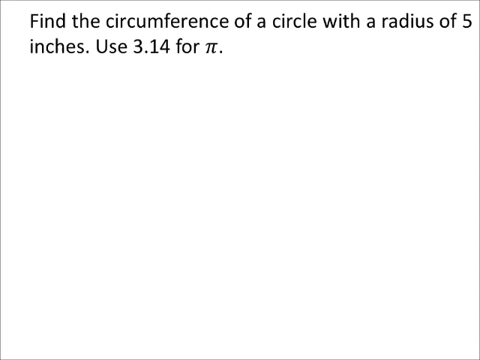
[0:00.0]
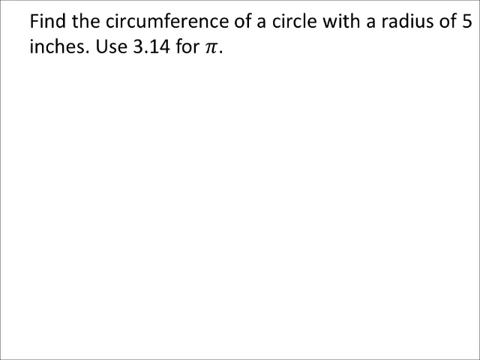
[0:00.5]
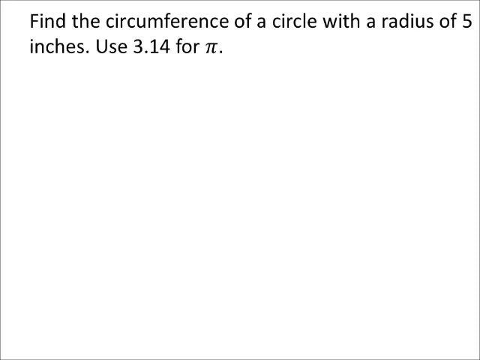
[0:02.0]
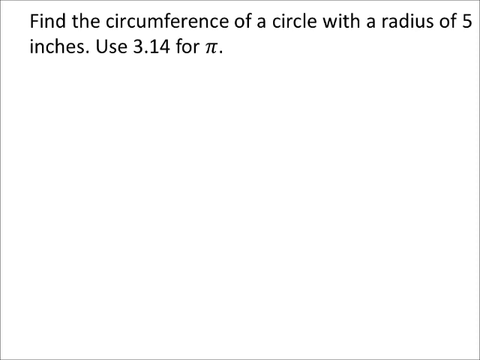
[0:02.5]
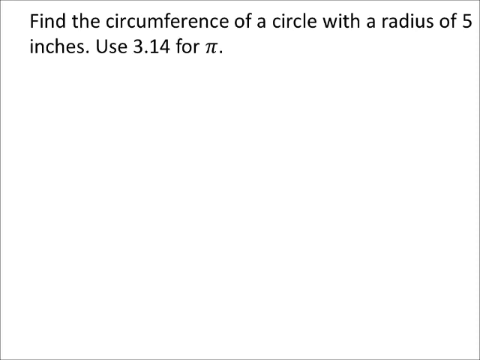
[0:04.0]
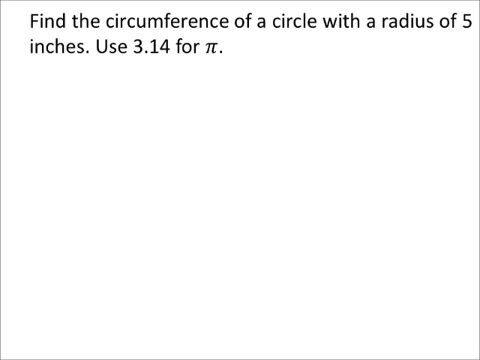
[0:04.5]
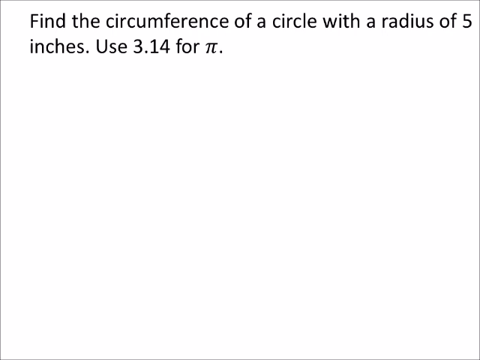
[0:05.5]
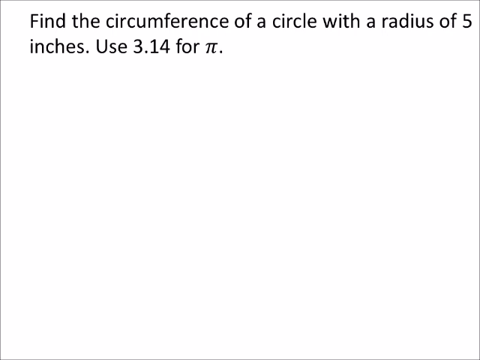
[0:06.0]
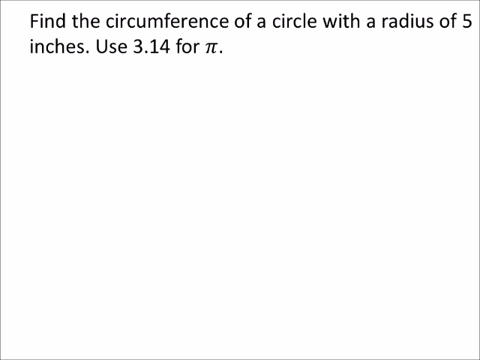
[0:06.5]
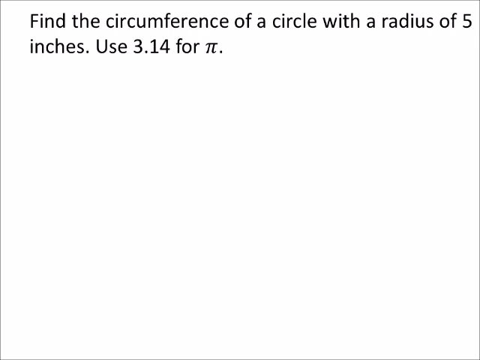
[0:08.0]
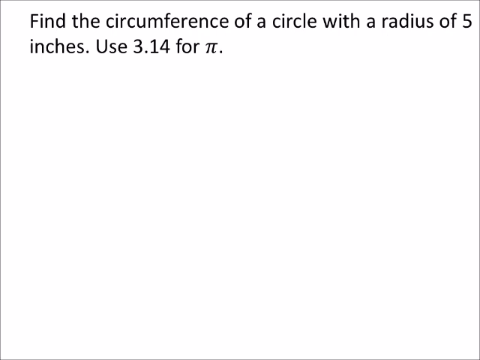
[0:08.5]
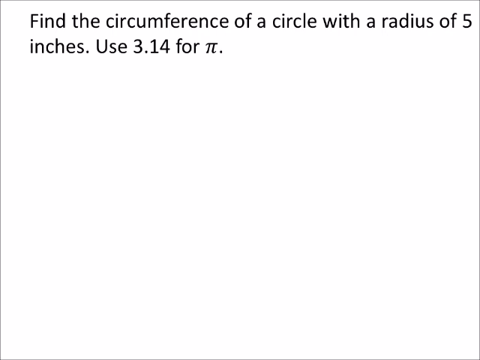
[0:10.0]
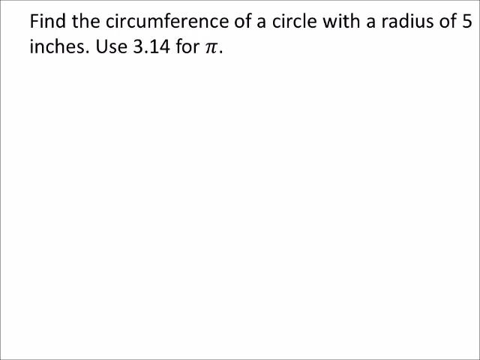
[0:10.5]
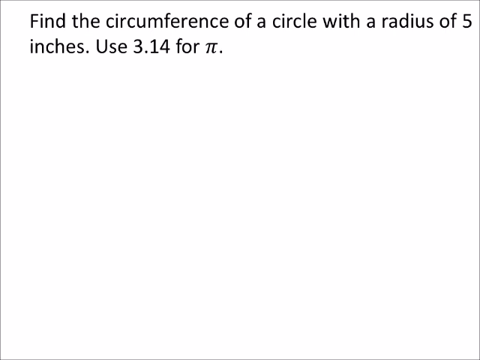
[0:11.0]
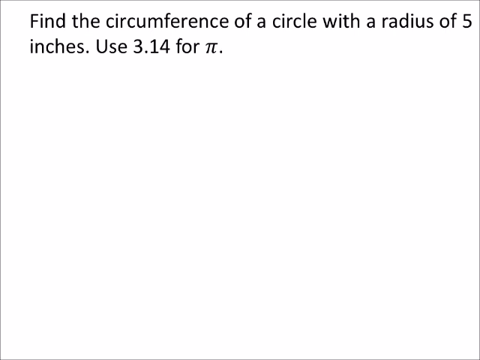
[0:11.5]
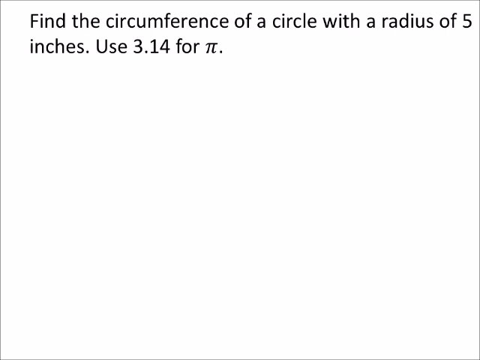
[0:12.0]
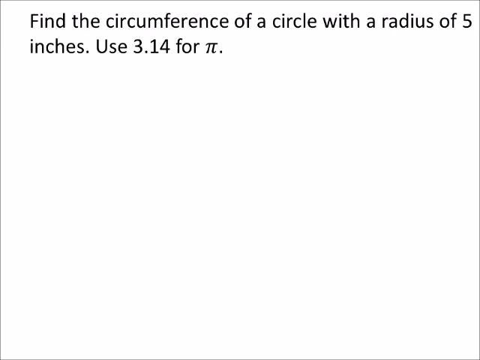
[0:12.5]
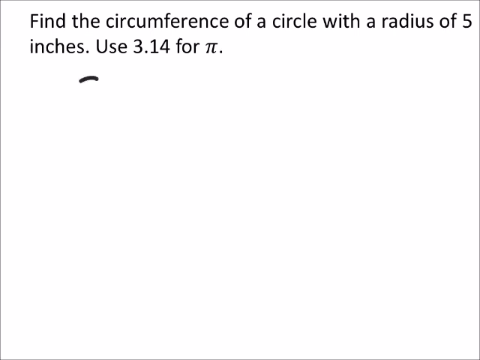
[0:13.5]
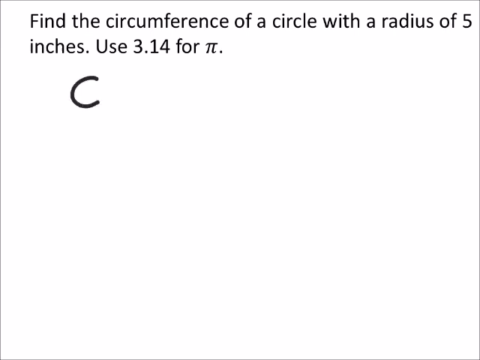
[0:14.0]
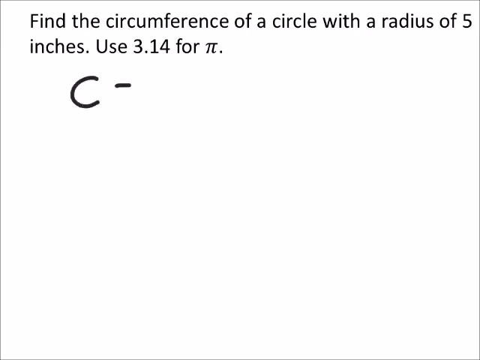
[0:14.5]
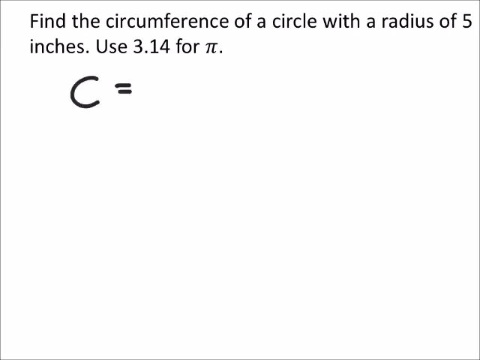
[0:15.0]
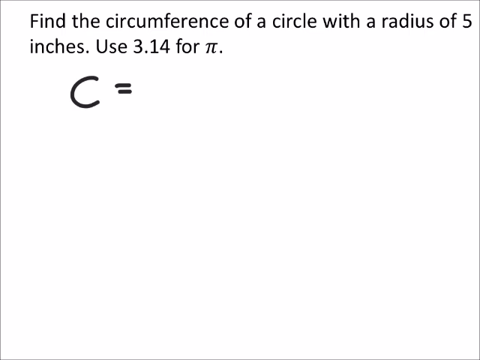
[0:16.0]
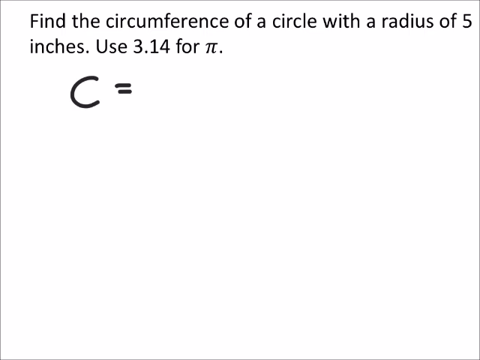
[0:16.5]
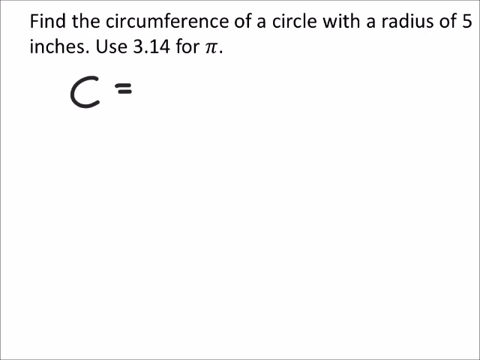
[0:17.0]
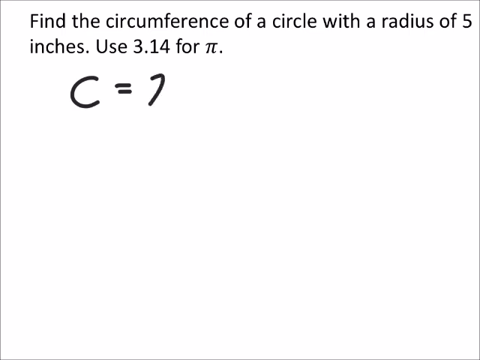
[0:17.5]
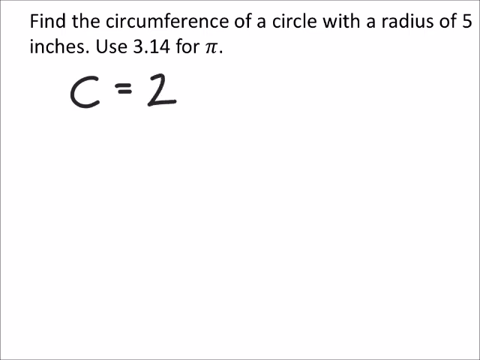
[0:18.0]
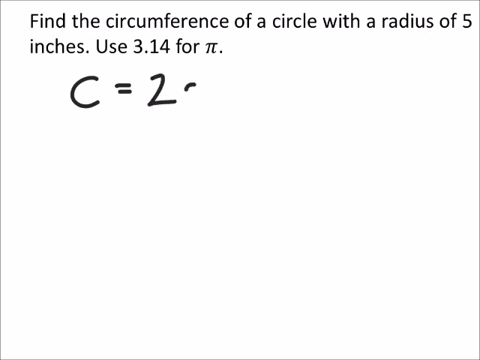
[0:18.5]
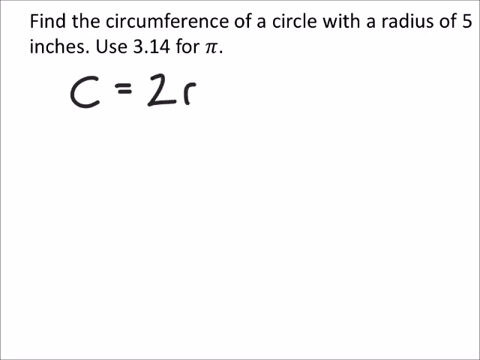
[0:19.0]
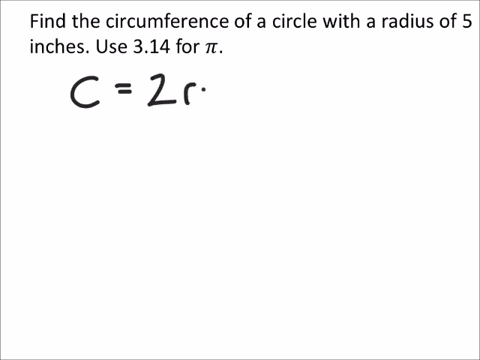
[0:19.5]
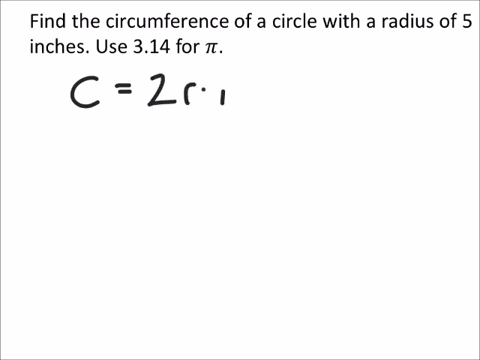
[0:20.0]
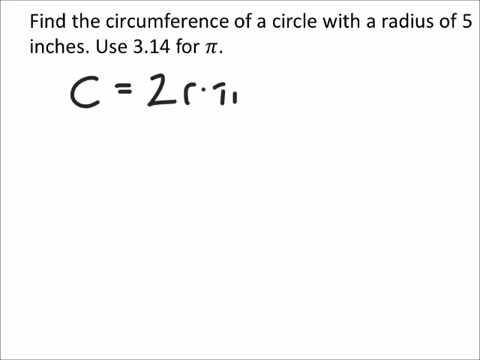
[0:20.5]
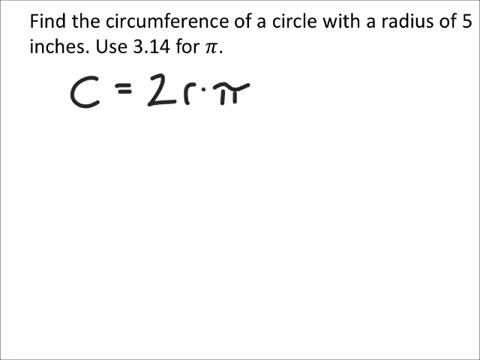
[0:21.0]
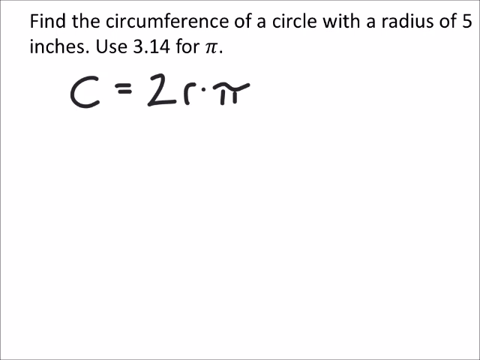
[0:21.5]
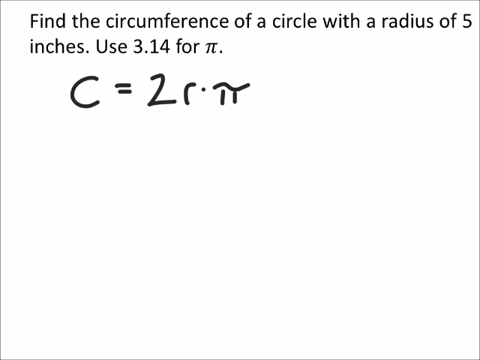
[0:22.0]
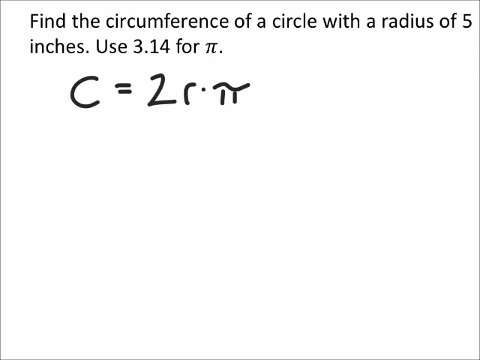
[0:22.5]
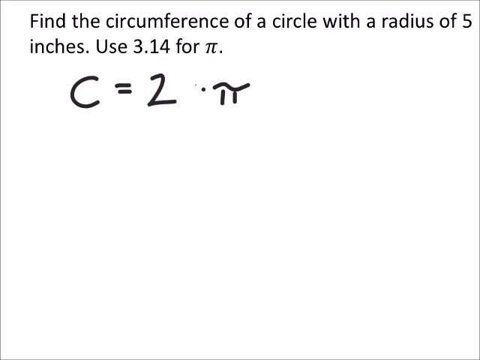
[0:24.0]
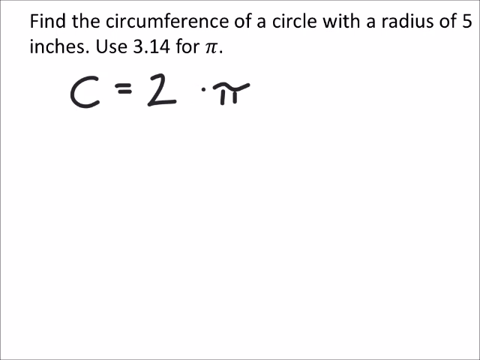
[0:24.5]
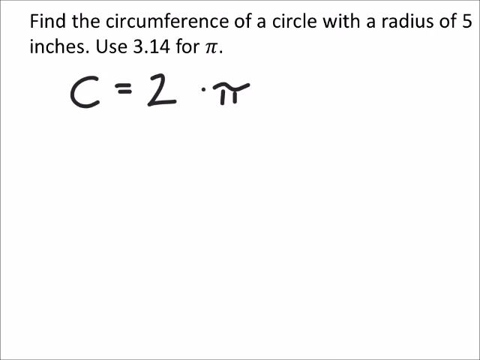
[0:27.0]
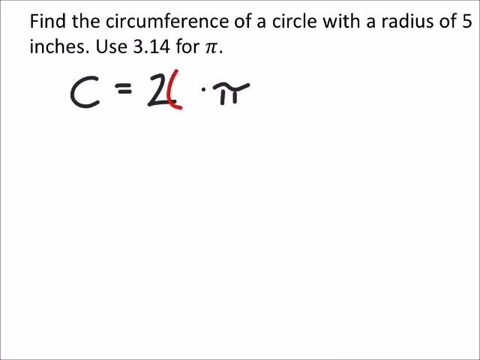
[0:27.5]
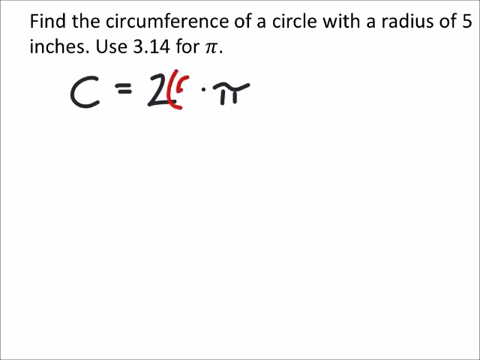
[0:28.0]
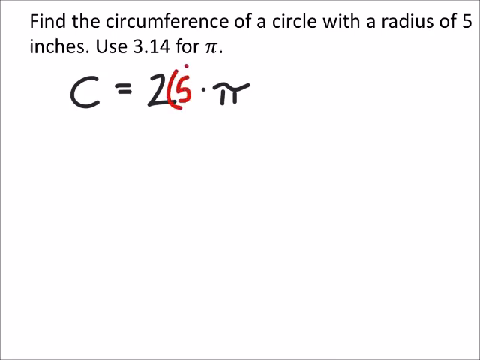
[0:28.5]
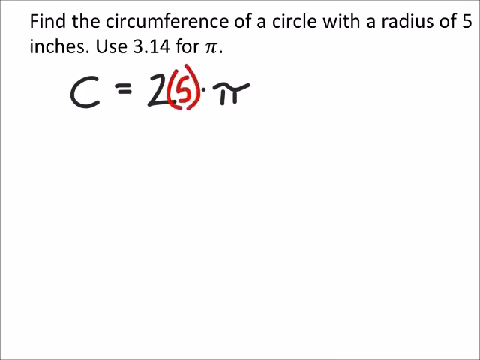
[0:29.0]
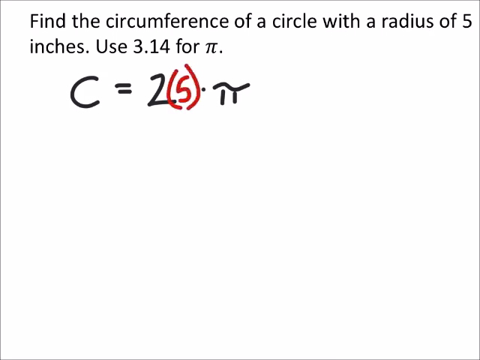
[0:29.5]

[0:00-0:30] The video presents a mathematical problem. It opens on a white screen with black text reading "find the circumference of a circle with a radius of 5 inches. Use 3.14 for pi." This text lingers for several seconds, then black text gradually appears beneath it as if handwritten by someone holding a pen, reading "c = 2 · π", with pi shown as the visual symbol for pi. After the number 2, a red pen draws two brackets with a 5 in the centre, so the text reads "c = 2(5) · π". This stays on screen, and no further working out of the problem is shown.